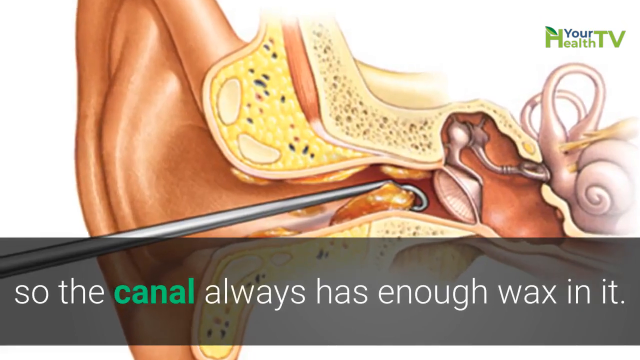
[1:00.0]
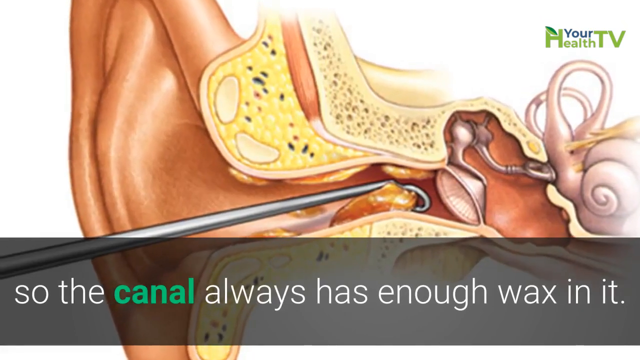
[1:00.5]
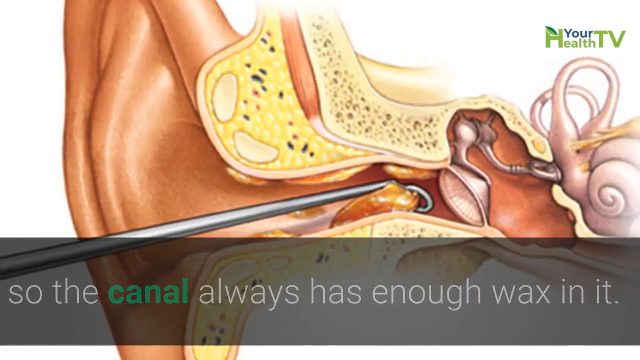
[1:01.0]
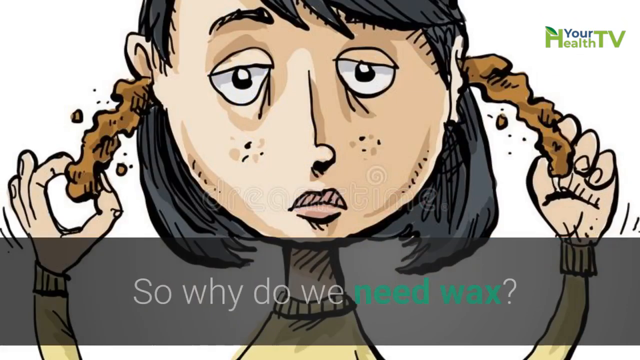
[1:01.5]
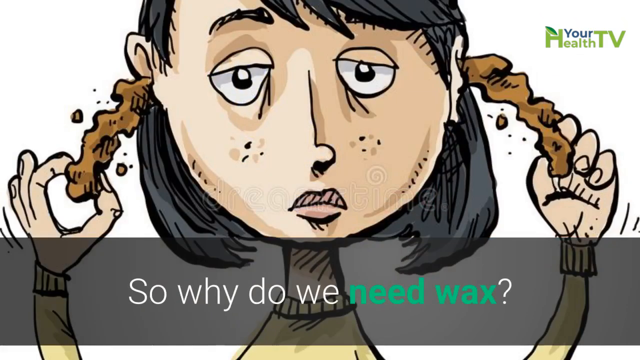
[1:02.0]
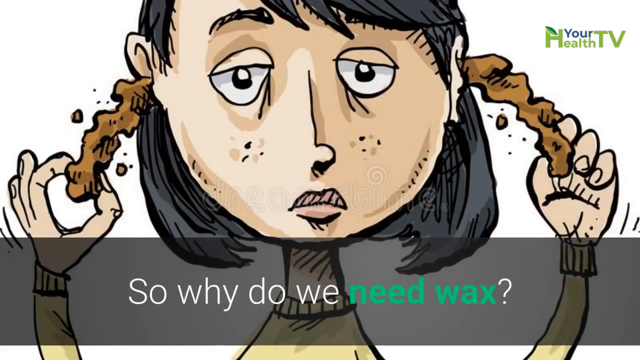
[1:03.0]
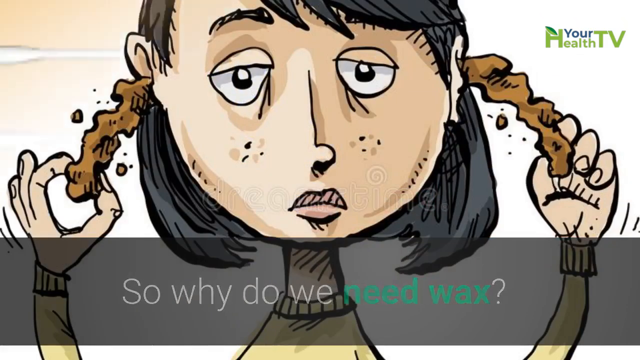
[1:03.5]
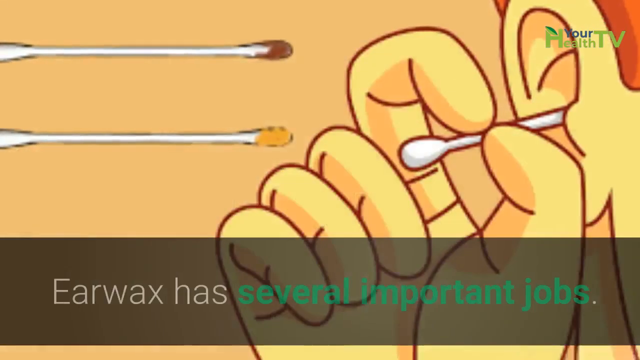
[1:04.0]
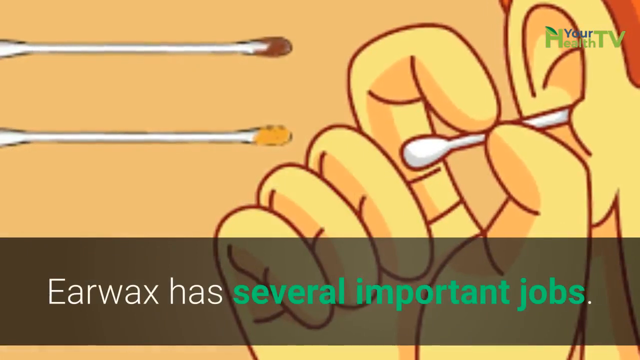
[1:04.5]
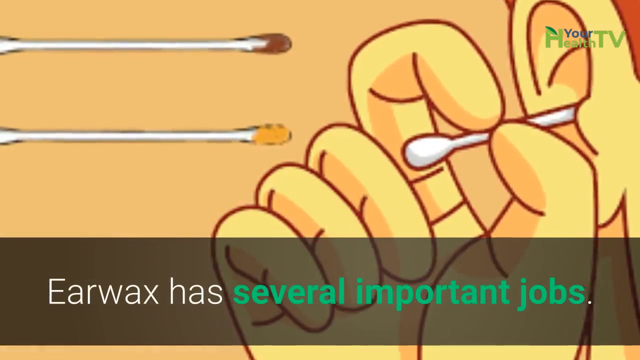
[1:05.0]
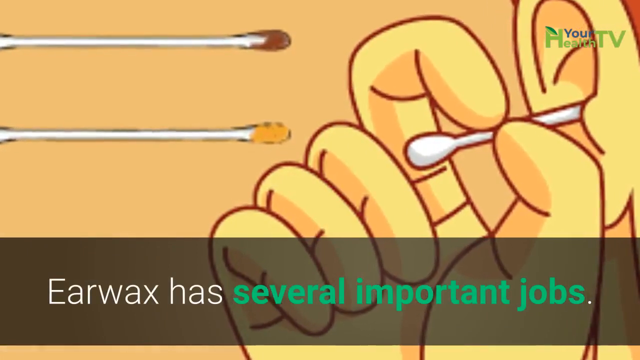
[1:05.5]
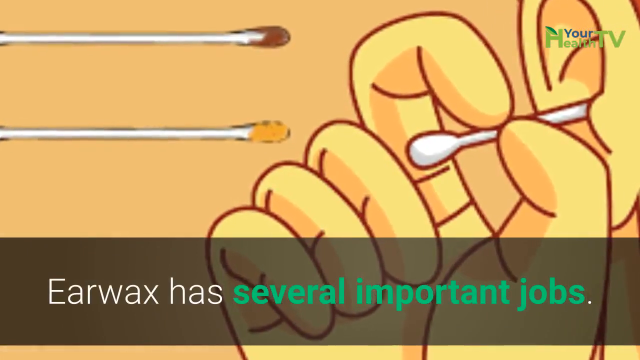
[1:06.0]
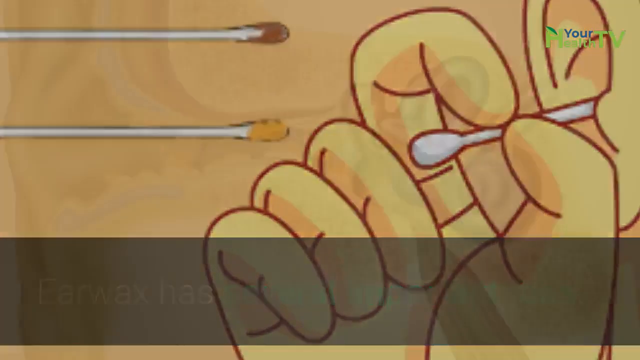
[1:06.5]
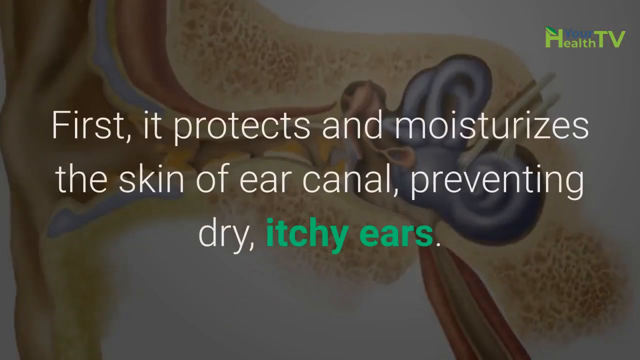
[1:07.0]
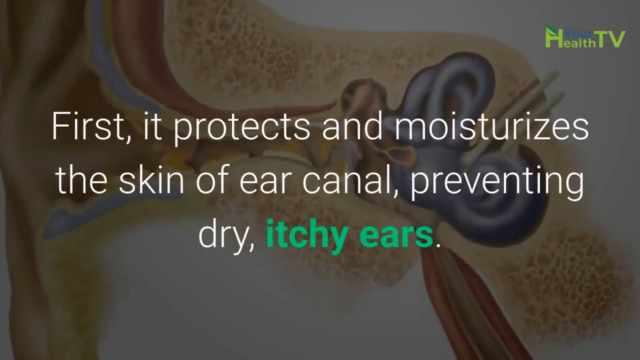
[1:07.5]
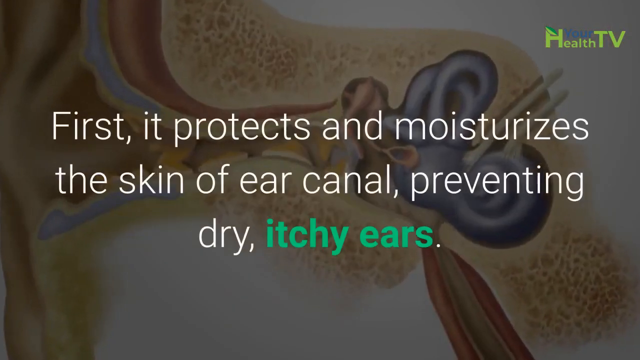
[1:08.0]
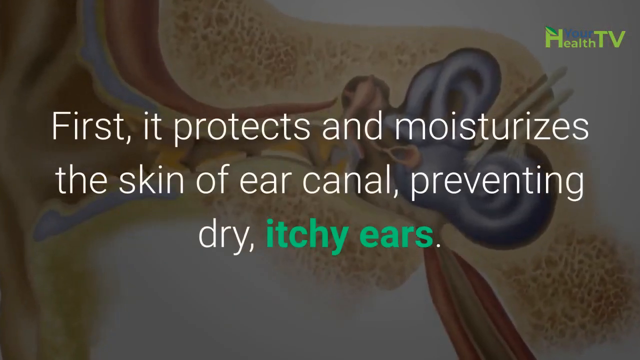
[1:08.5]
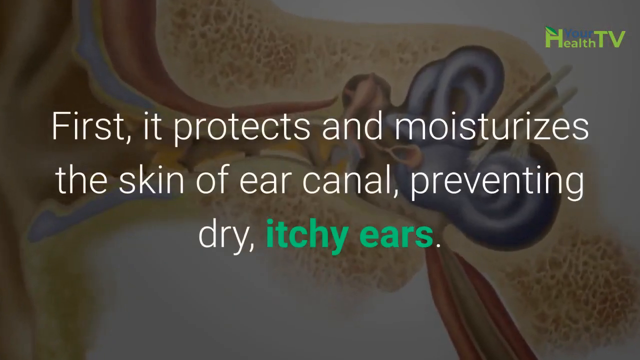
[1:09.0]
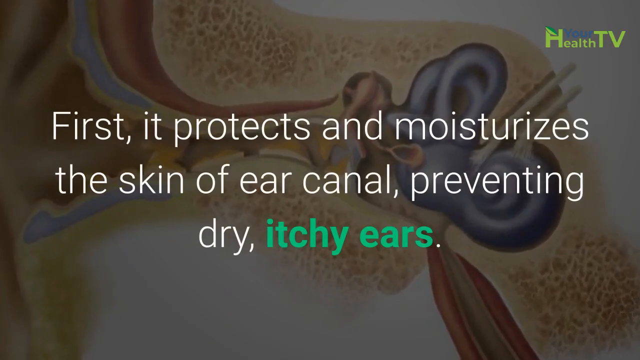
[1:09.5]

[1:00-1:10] A kind of comical drawing shows a young woman with a longer brown bob and bangs brushed to the side, with an almost bored or sad look on her face. She appears to wear a turtleneck, and with both hands she pulls long chains, almost logs, of earwax out of both ears. Text at the bottom of the screen reads "so why do we need wax?" Another graphic shows two Q-tips on the left-hand side: one end of the top one looks very brown, and the one underneath looks yellow. On the right-hand side, a Caucasian person's hand pokes another Q-tip into their ear. Text reads "earwax has several important jobs." A very colorful cross-section diagram of an ear follows, running from the outer ear to the inner ear canal and color-coded so the different parts can be identified. Text reads "first it protects and moisturizes the skin of ear canal preventing dry itchy ears."